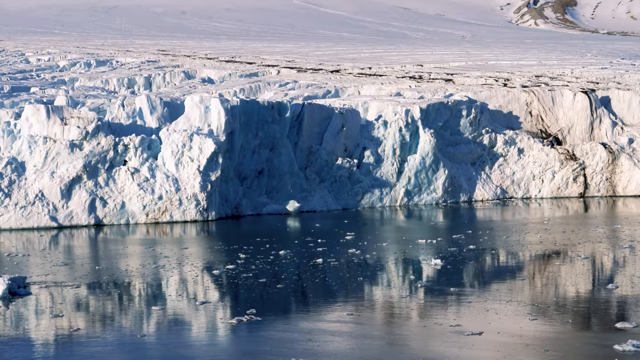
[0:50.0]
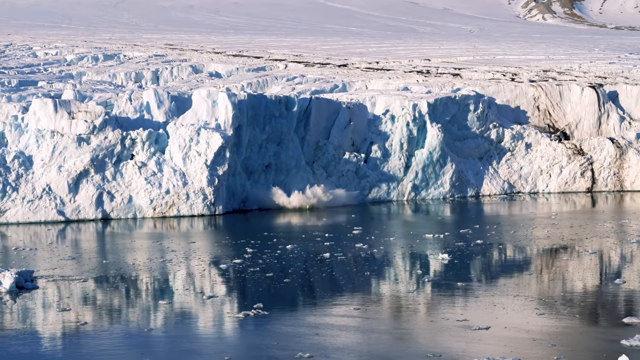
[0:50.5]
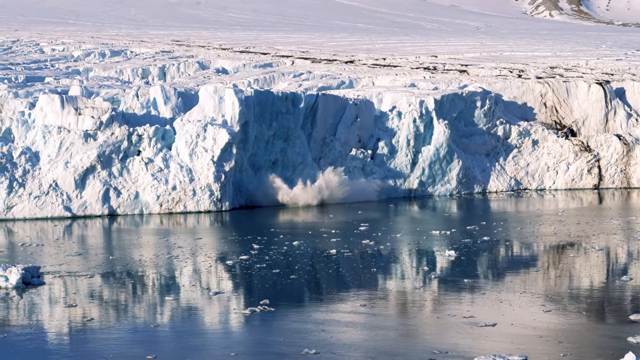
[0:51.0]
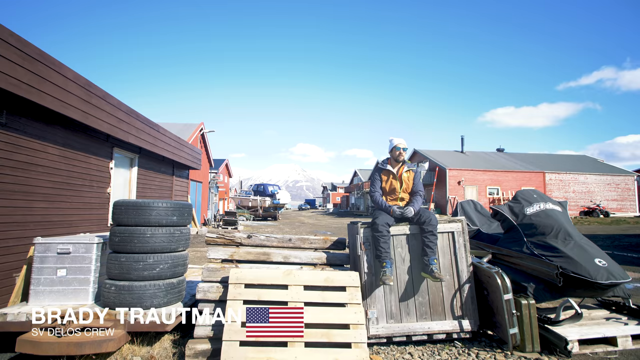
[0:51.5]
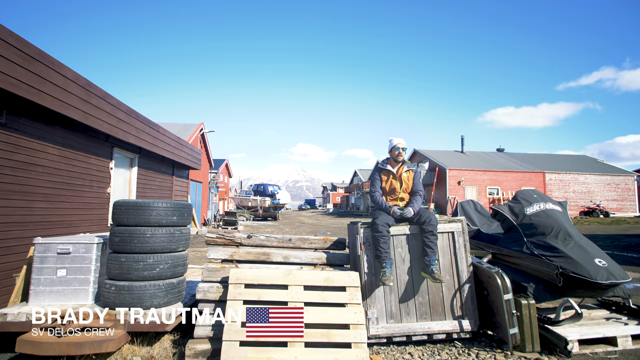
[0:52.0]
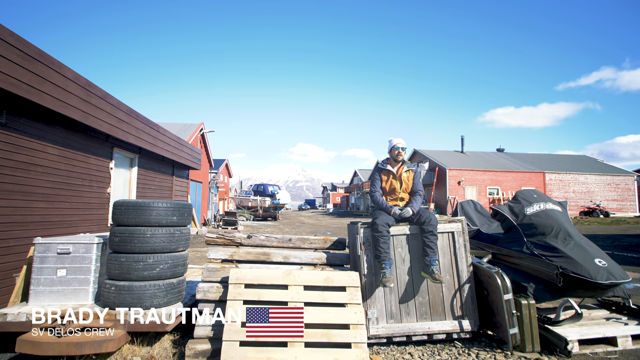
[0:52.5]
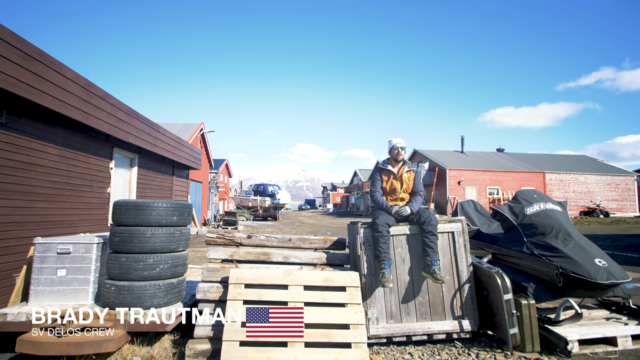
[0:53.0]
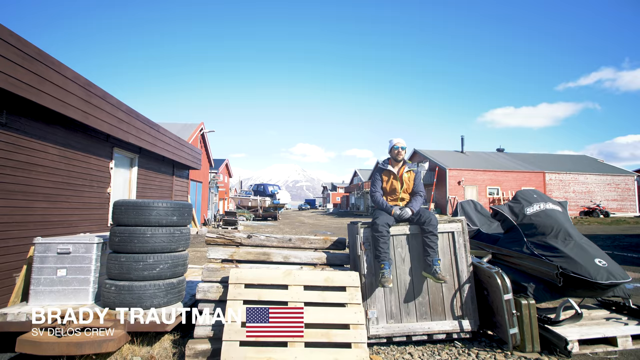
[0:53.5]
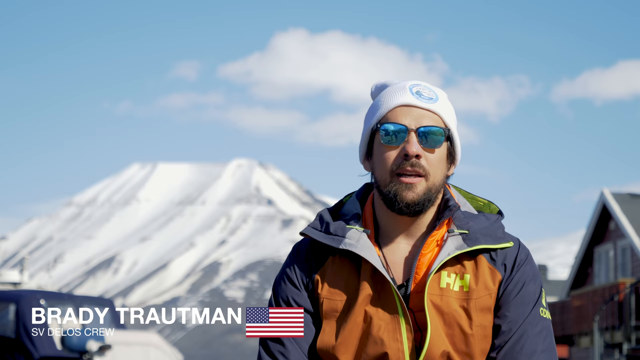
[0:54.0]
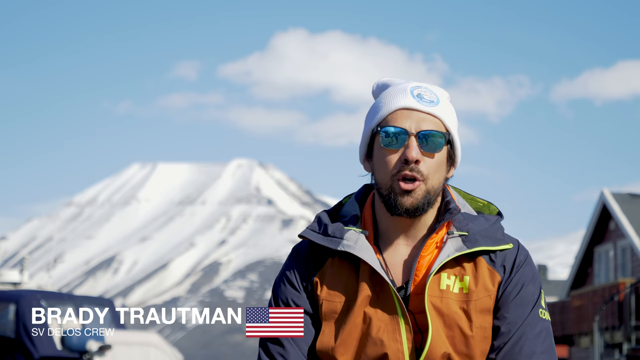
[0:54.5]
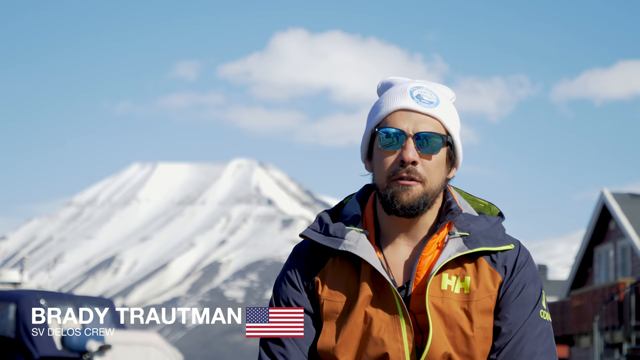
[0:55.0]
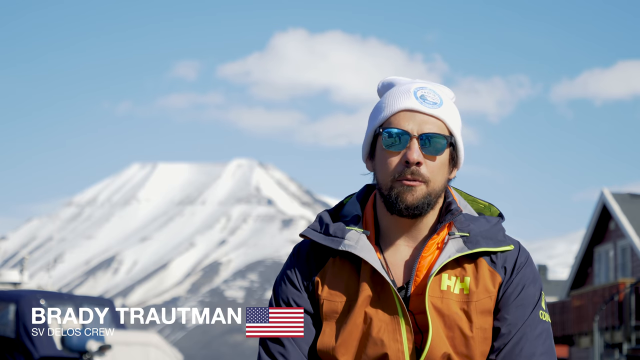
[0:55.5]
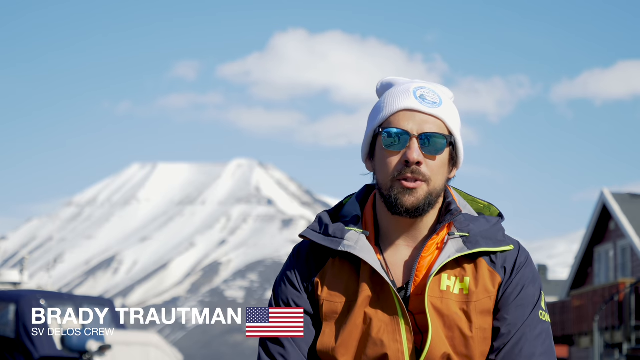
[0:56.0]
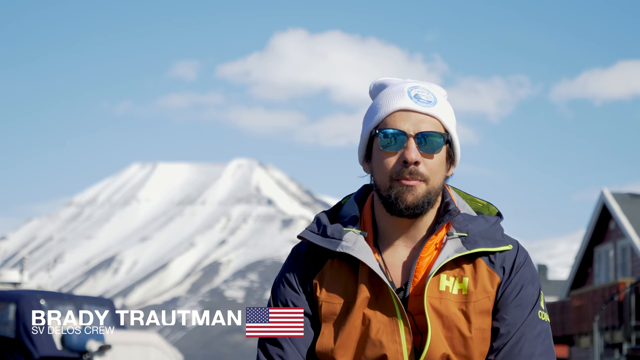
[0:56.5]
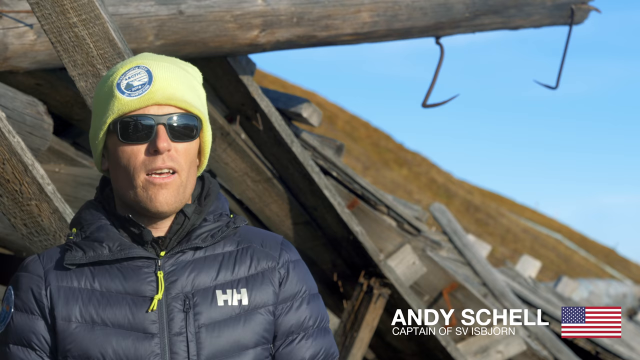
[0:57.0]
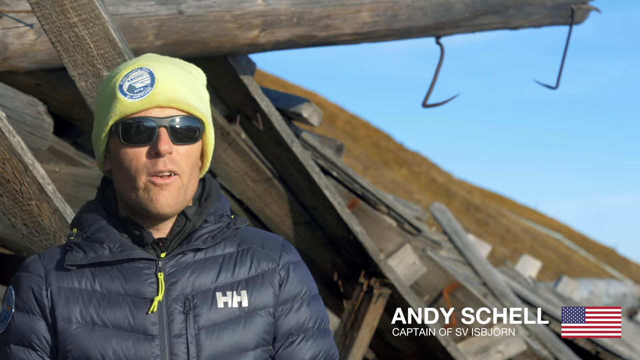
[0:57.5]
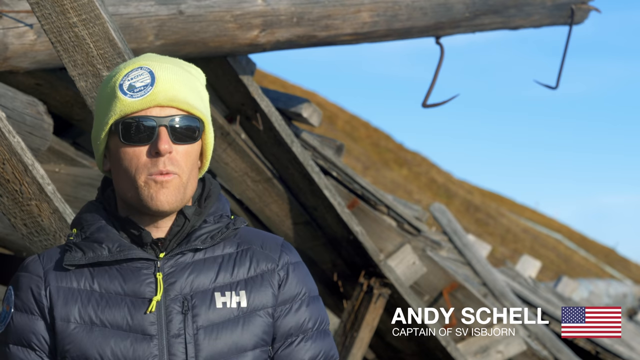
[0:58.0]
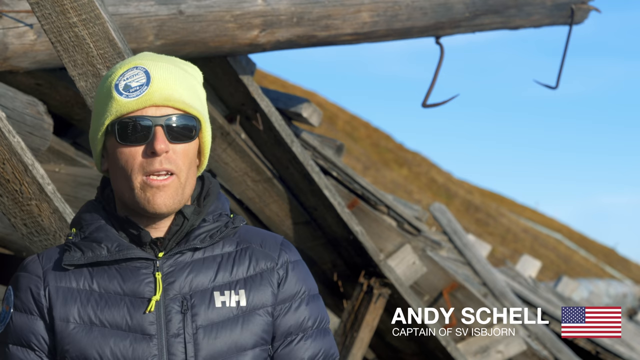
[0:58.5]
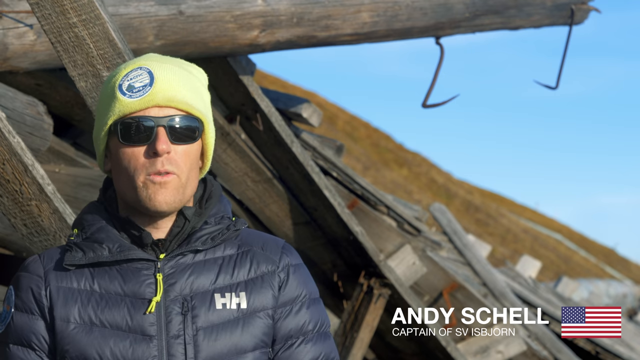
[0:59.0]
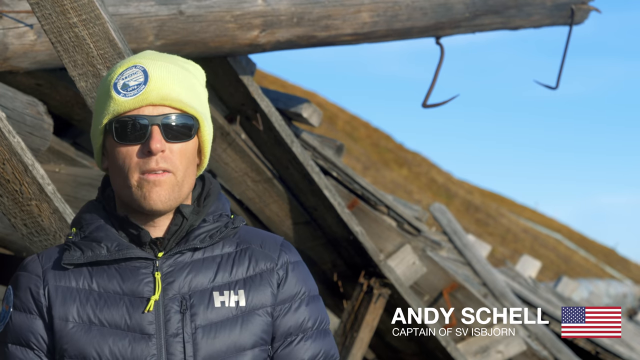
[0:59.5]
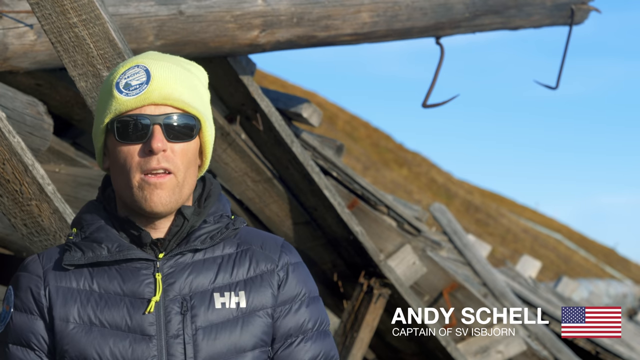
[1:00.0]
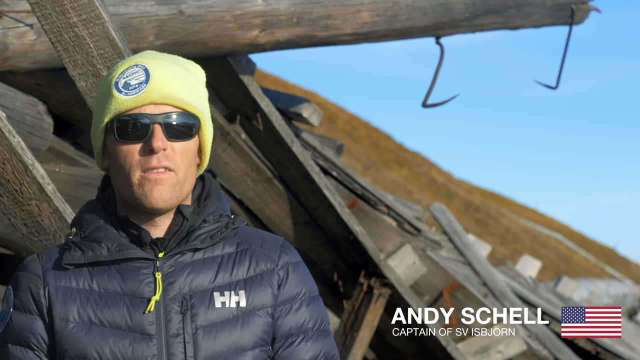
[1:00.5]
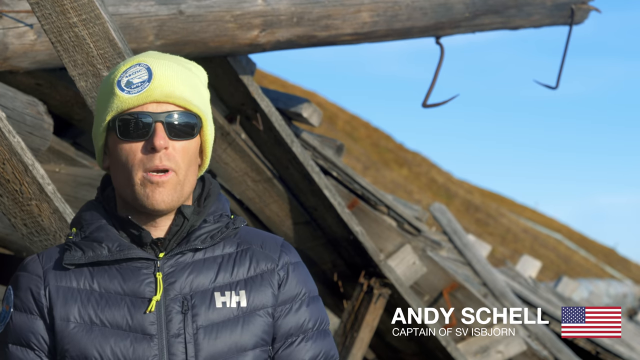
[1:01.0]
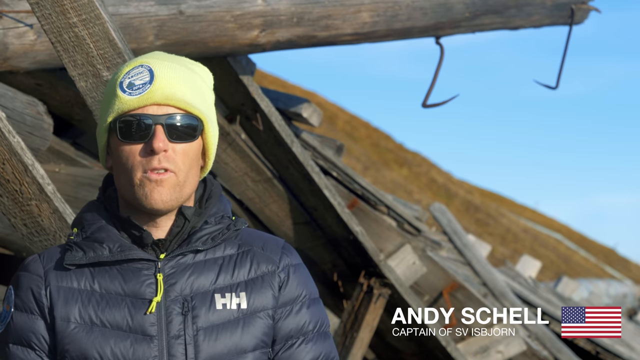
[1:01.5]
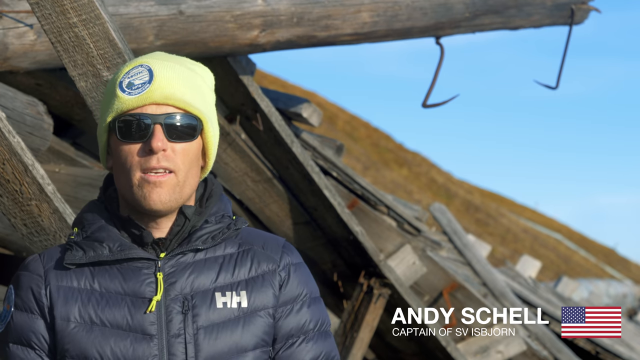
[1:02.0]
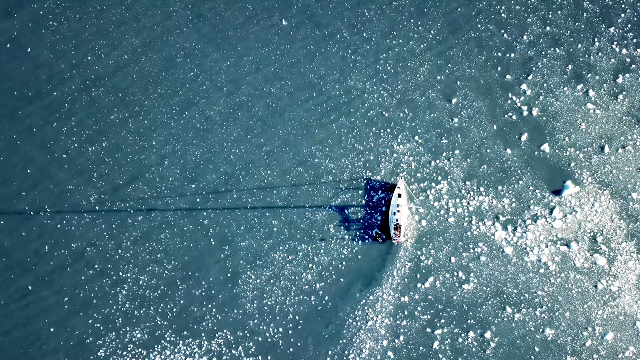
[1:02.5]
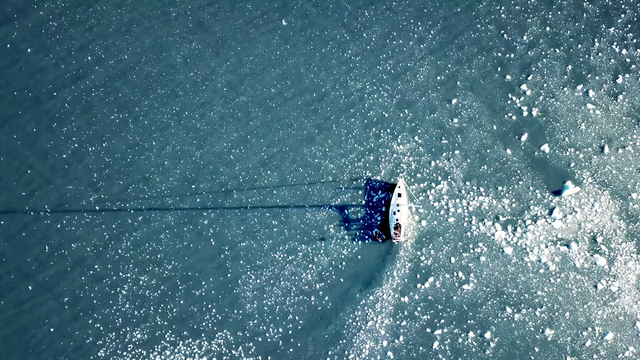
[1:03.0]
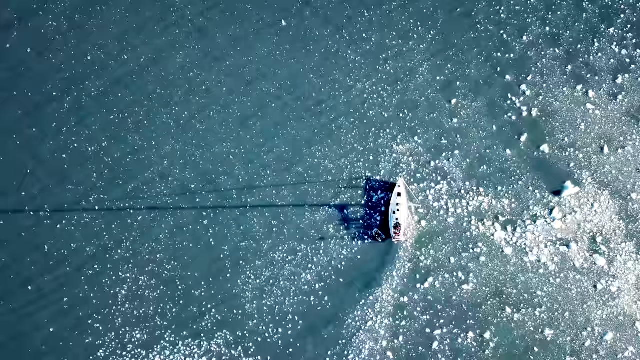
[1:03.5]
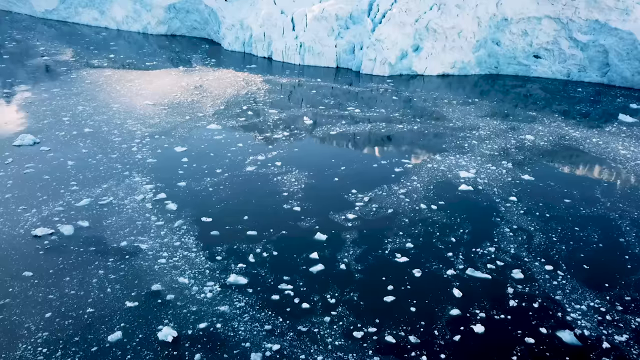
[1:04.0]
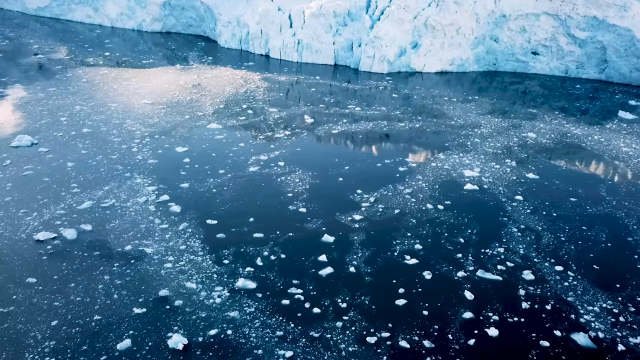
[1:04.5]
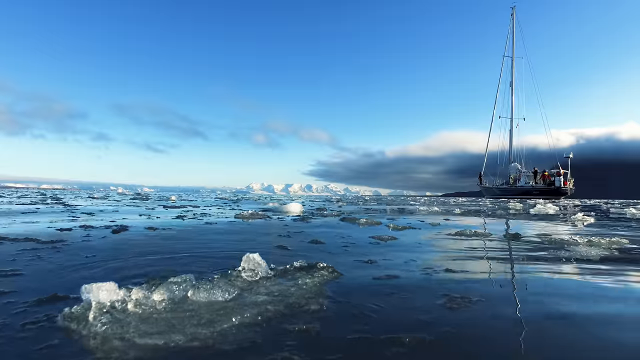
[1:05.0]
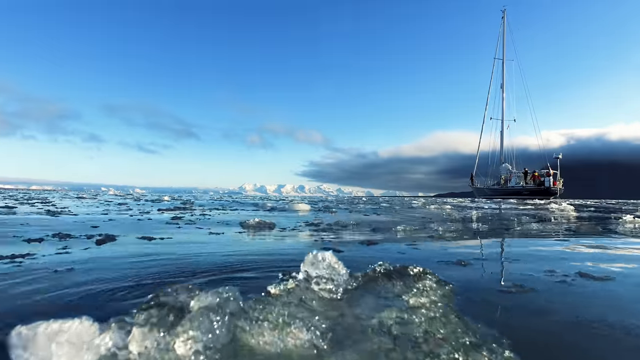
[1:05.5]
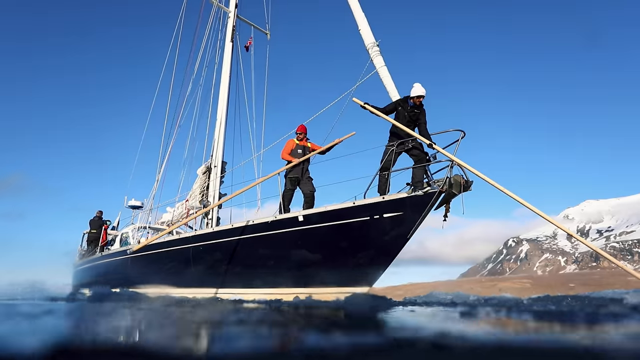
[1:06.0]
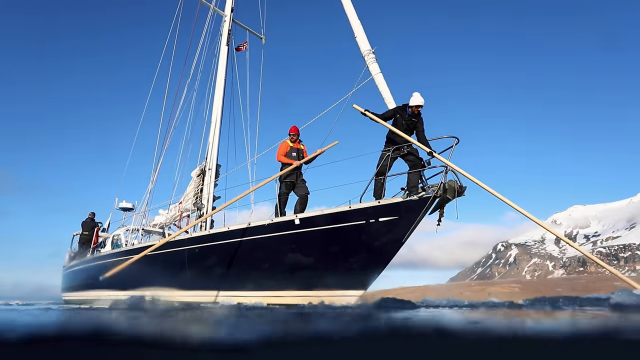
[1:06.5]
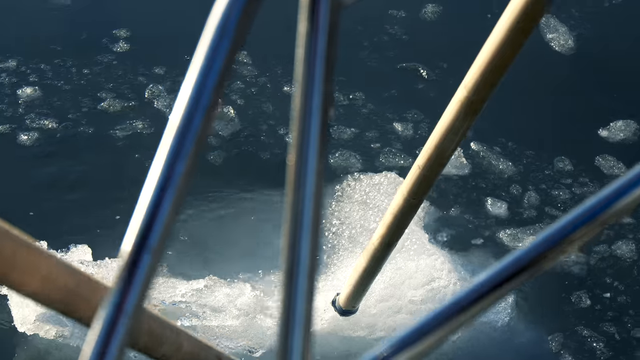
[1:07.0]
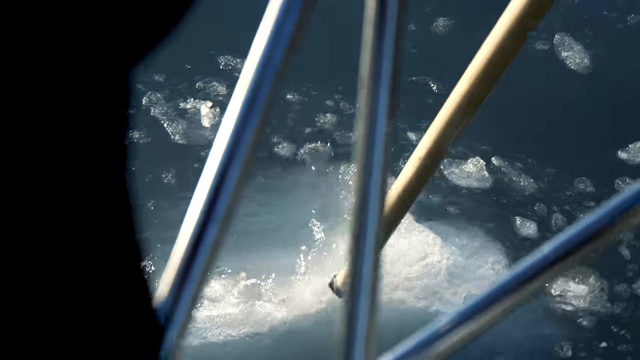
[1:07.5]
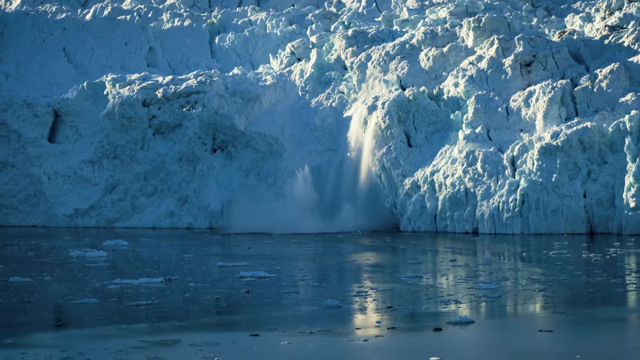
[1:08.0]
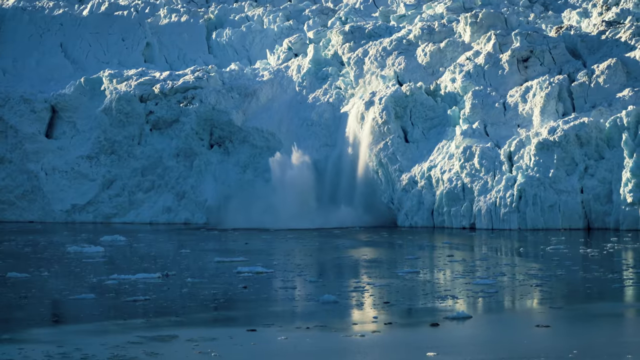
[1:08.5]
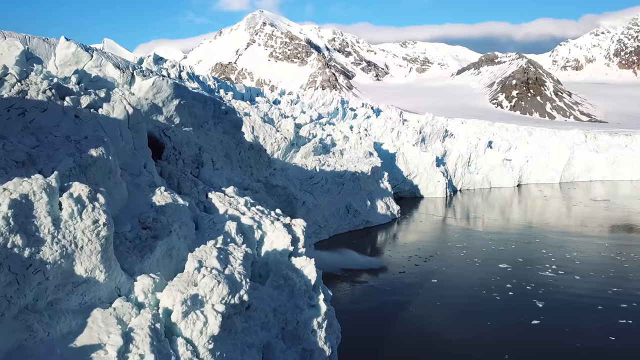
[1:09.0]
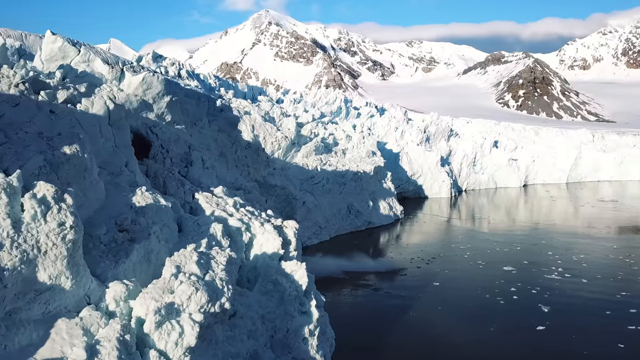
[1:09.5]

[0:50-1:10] Glaciers melt, break off and plop into the water. A guy outside in the sunshine, wearing an open jacket, a hat and glasses, is talking. Another man stands under what looks like a log structure, maybe a building or a cabin, with two hooks coming down near him that look quite dangerous; he looks into the sun and talks, and his jacket has "HH" on it. Broken-up pieces of ice float in the water. The sailboat goes near them with its sail down, and the men on board move it along with two poles. A few men on the boat watch the glaciers melting as little bits of ice fall into the water.